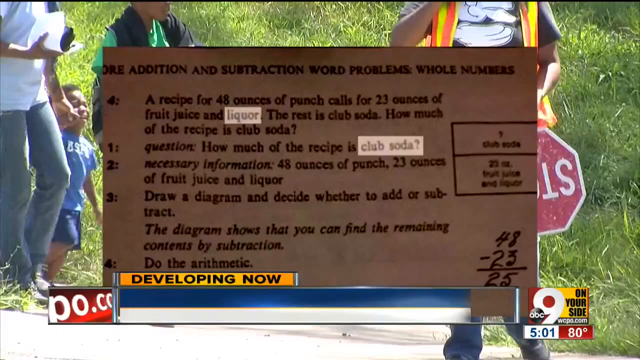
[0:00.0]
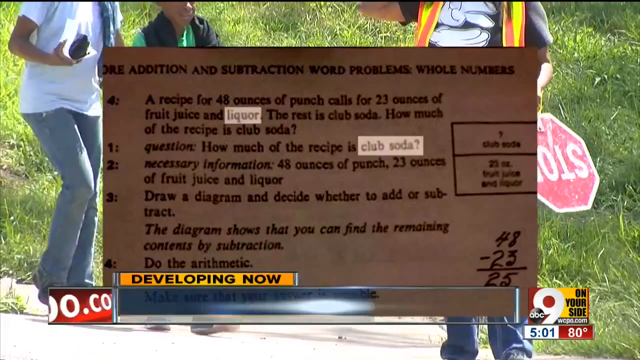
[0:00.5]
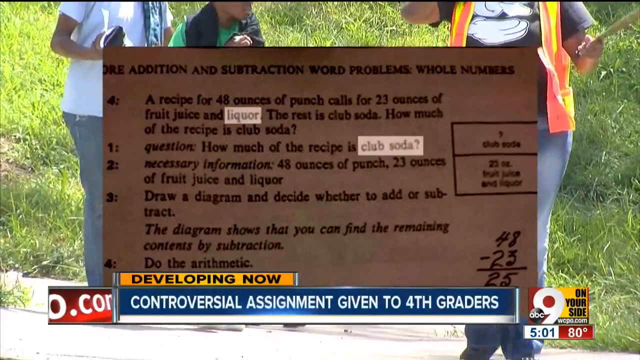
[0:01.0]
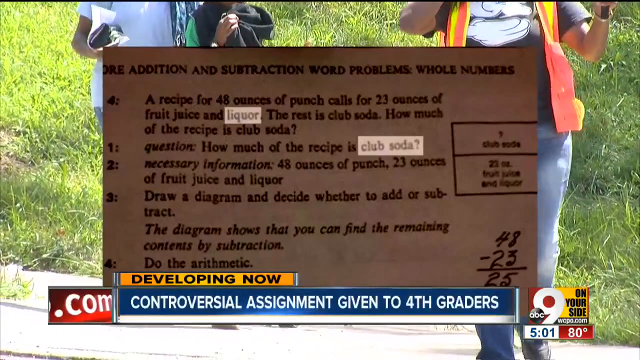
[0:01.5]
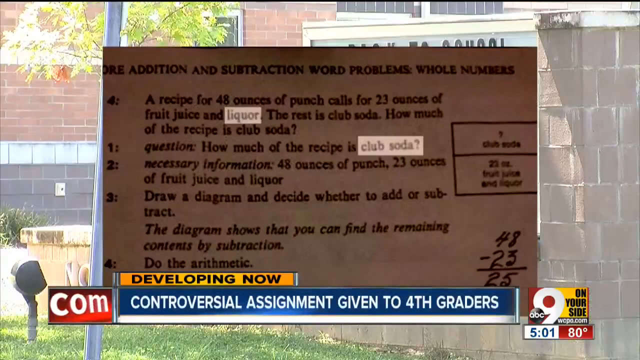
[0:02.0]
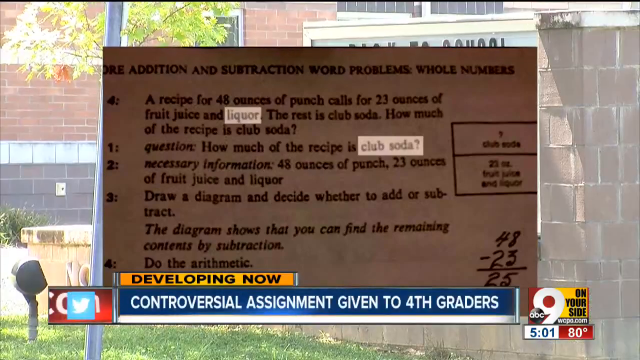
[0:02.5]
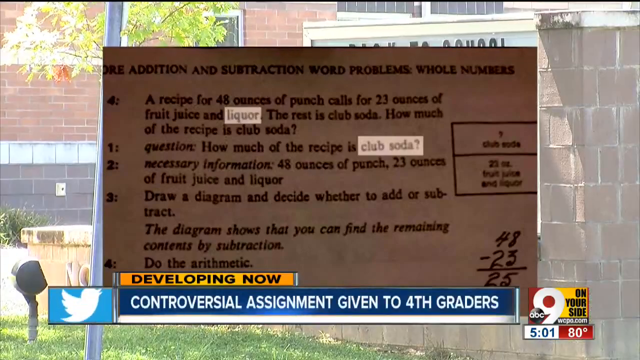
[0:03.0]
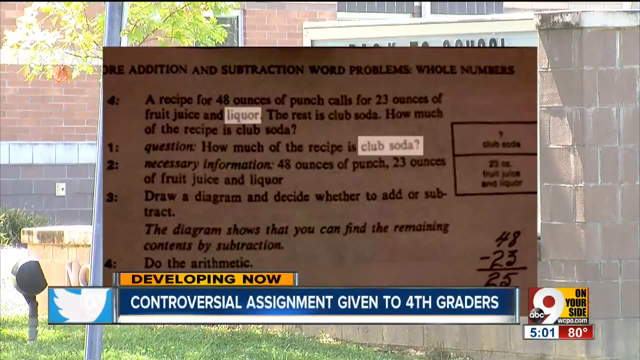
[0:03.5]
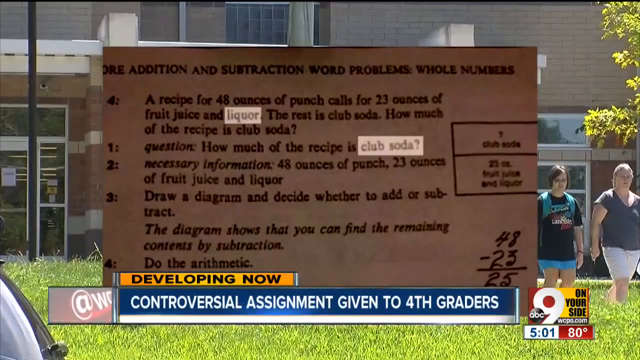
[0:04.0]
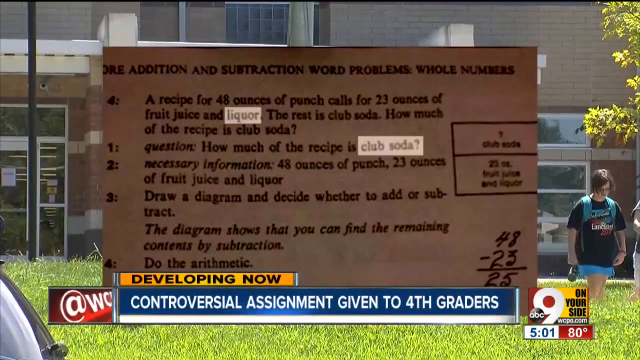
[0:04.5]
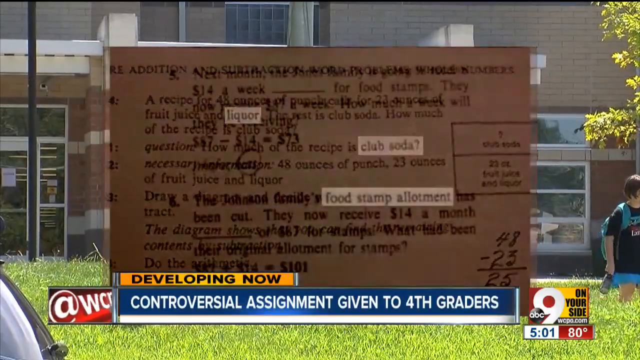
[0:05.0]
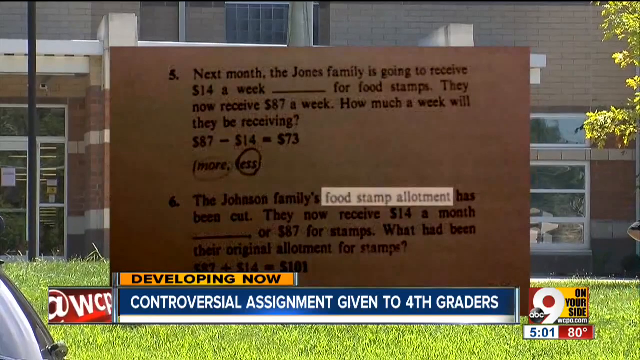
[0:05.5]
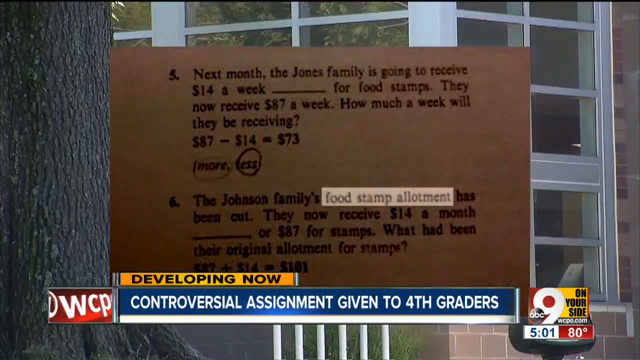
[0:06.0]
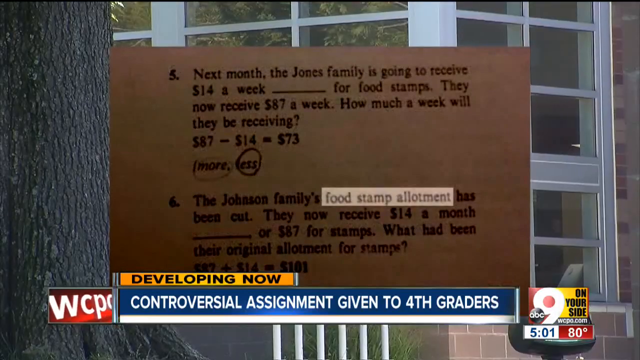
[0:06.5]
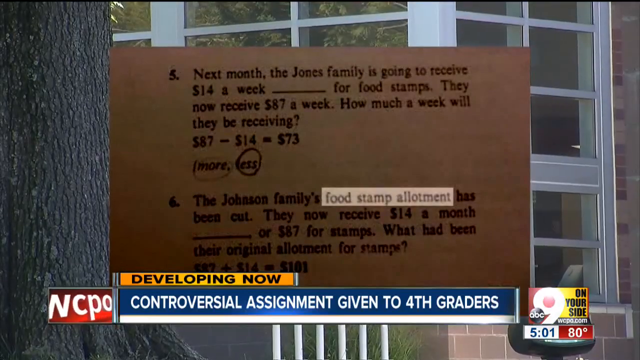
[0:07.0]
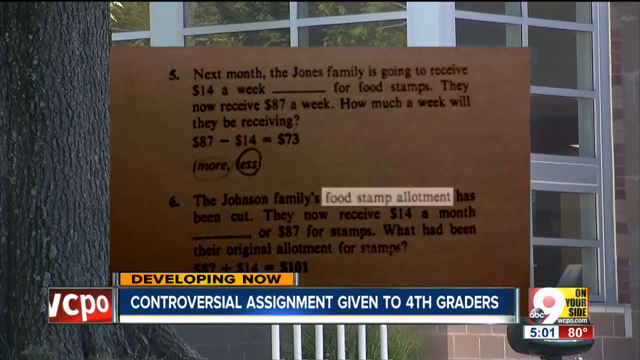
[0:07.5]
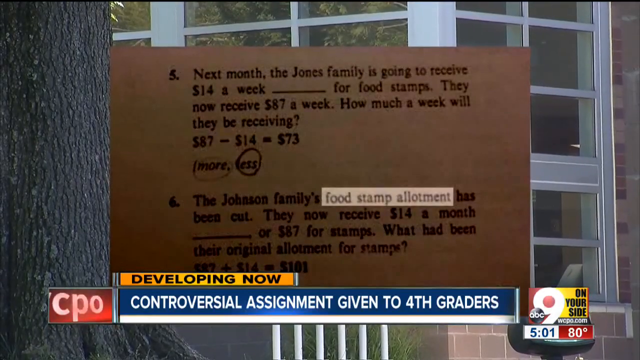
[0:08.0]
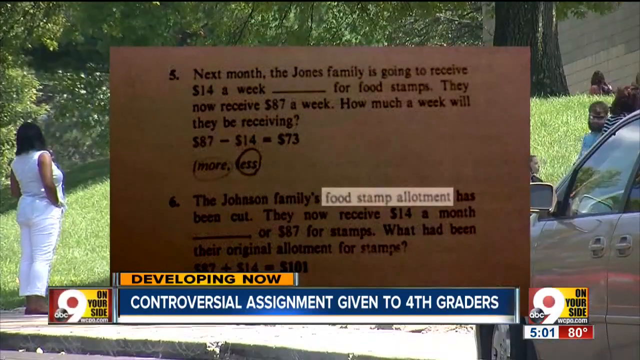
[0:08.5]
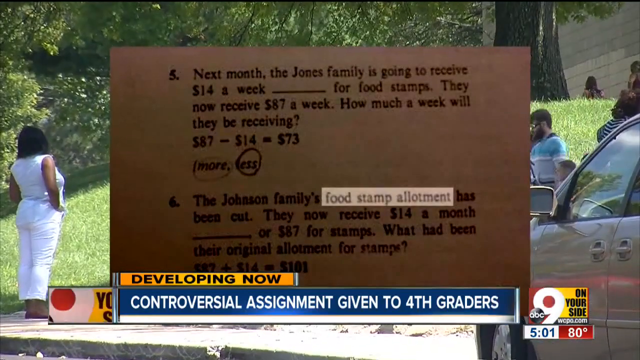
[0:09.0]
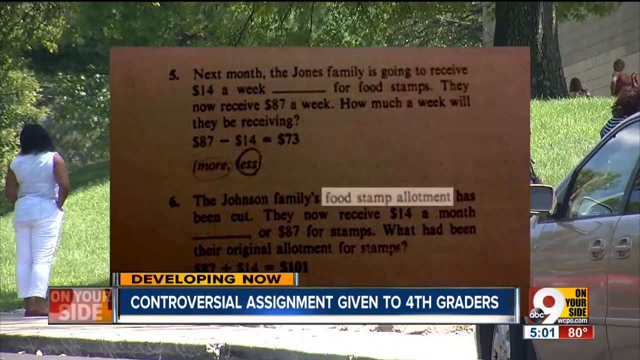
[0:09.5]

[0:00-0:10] A news program is on the screen, with "developing now" at the very bottom and "nine on your side" on the right. Text in the middle of the screen shows a recipe, with "liquor" and "club soda" both highlighted. Behind it, two people are walking, and someone in a vest who looks to be a crossing guard walks in front of them, apparently holding up their left hand, which holds a stop sign. What appear to be some students then walk away from a building. The middle of the screen changes to more text in the center, with "food stamp allotments" highlighted. An exterior shot of a building with many windows follows, with people walking; a woman wearing white is on the left-hand side, and some of the people walk to the left in the image.